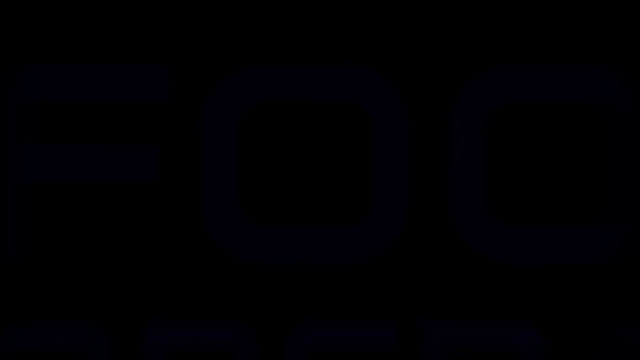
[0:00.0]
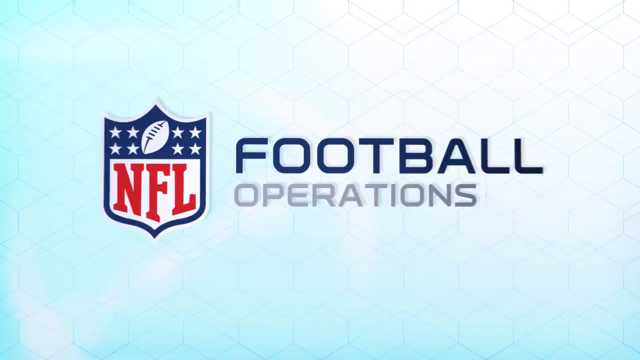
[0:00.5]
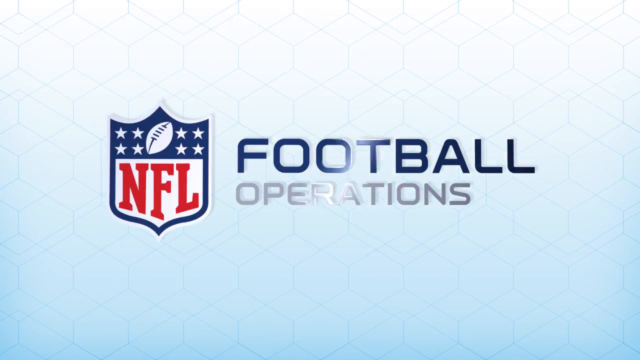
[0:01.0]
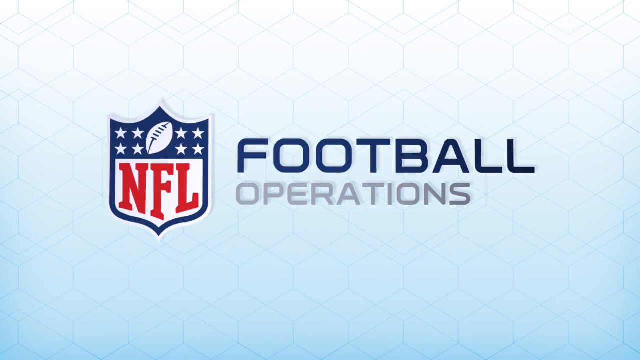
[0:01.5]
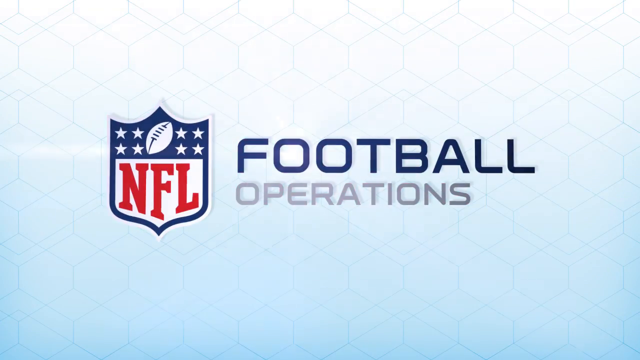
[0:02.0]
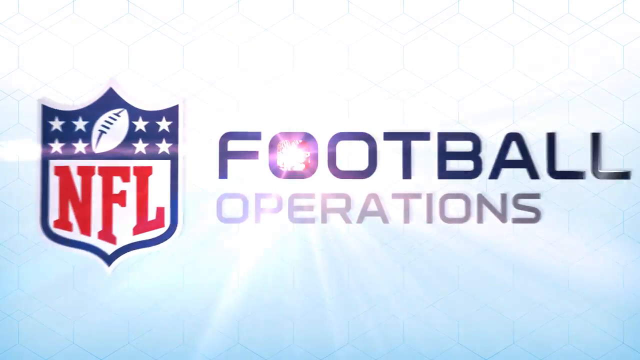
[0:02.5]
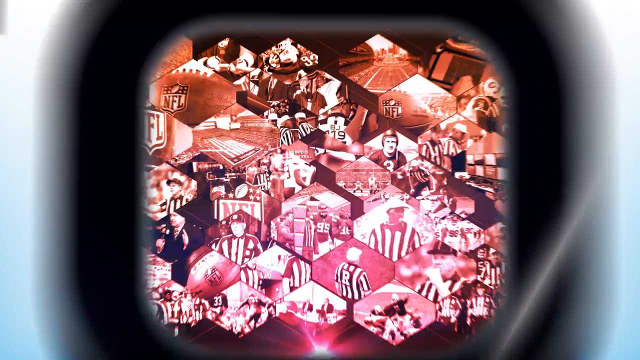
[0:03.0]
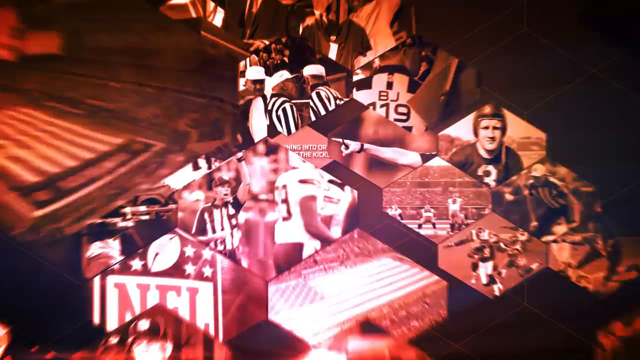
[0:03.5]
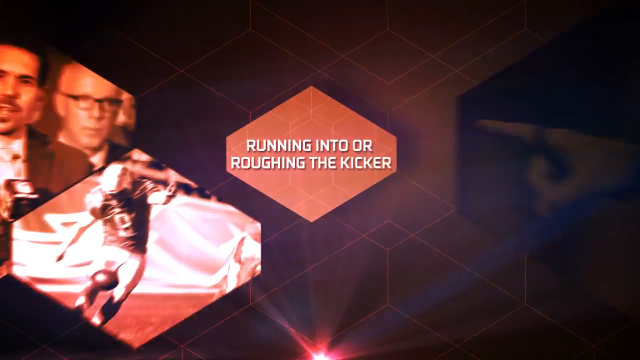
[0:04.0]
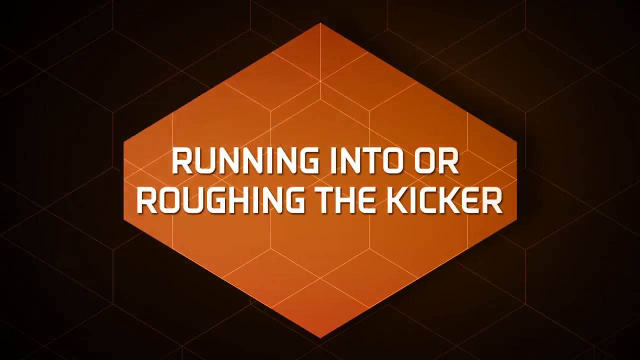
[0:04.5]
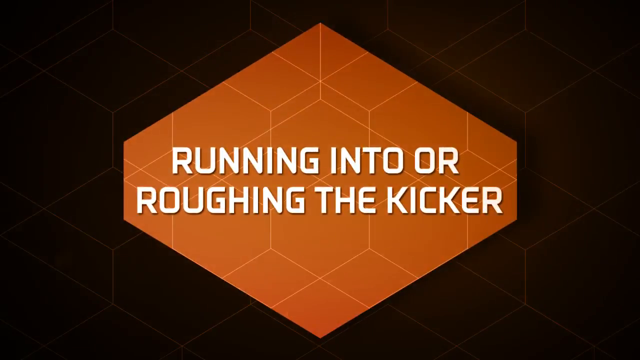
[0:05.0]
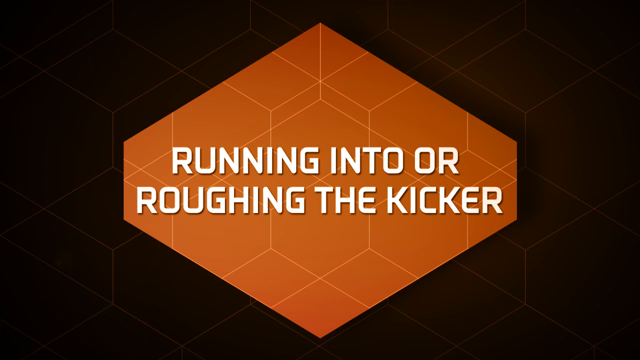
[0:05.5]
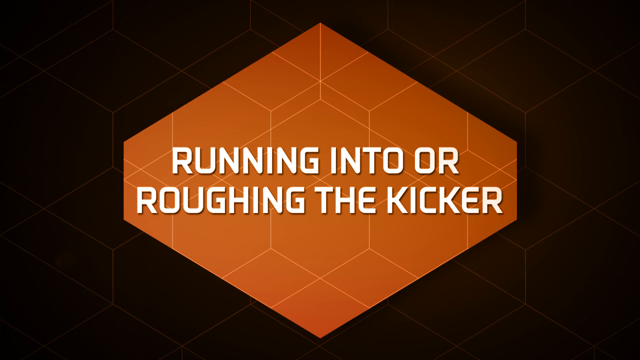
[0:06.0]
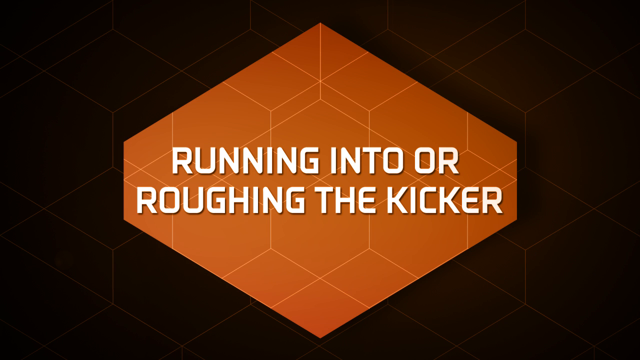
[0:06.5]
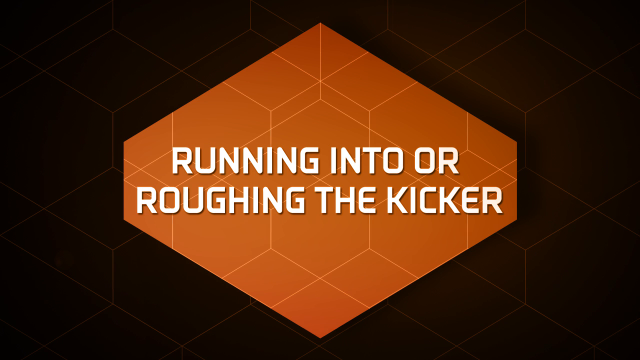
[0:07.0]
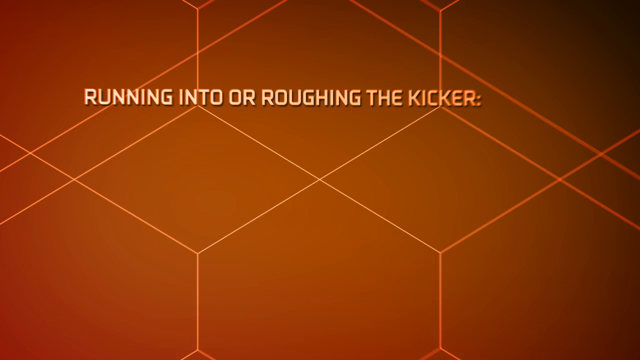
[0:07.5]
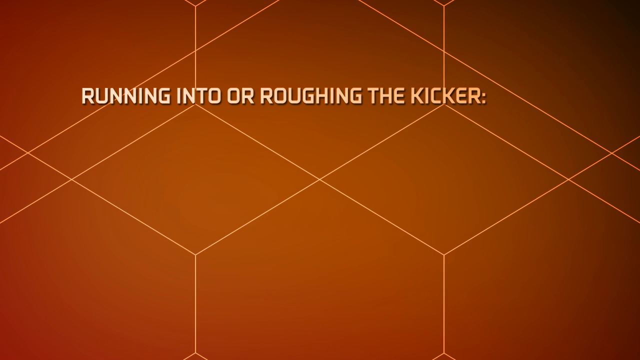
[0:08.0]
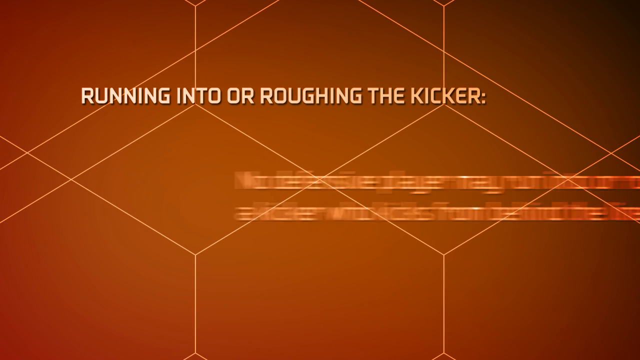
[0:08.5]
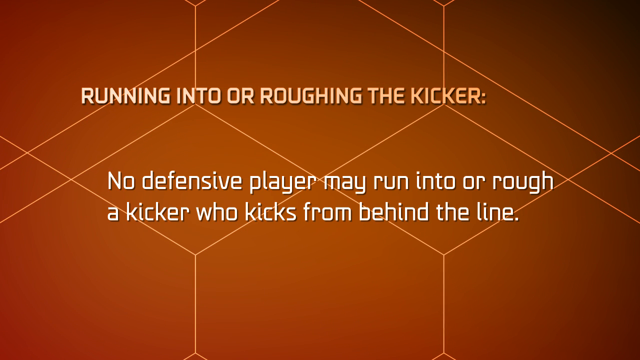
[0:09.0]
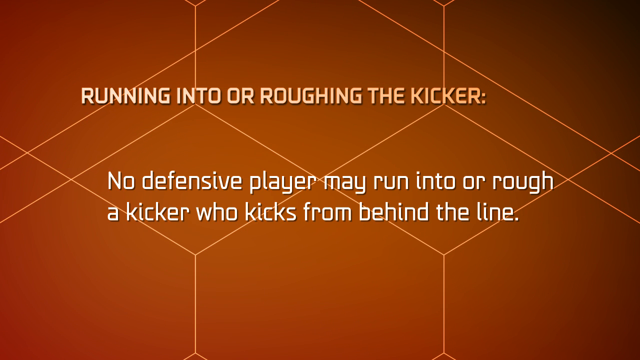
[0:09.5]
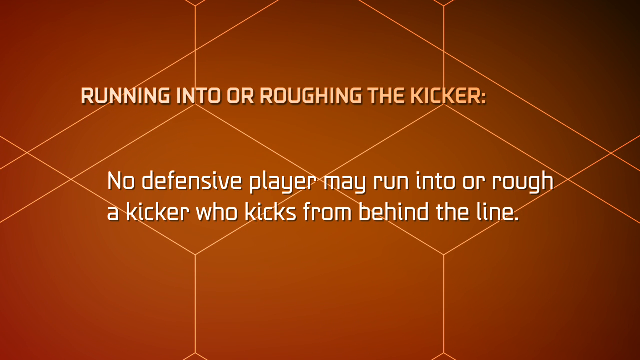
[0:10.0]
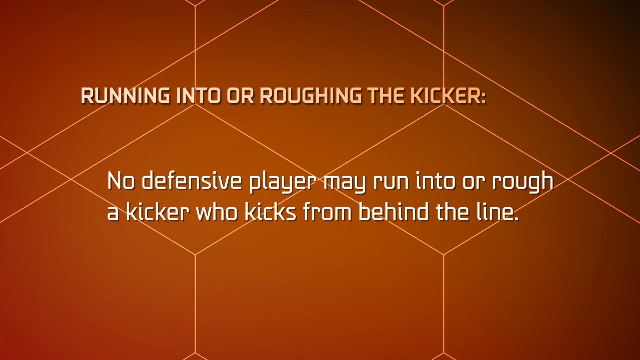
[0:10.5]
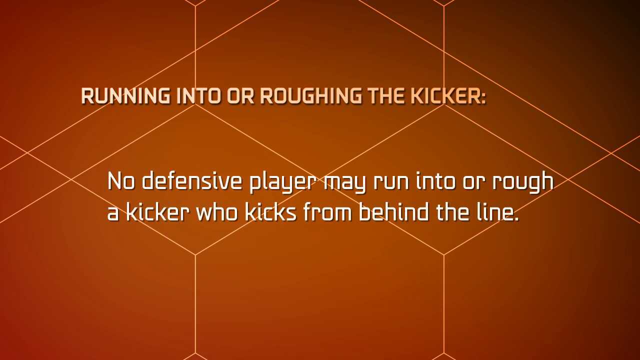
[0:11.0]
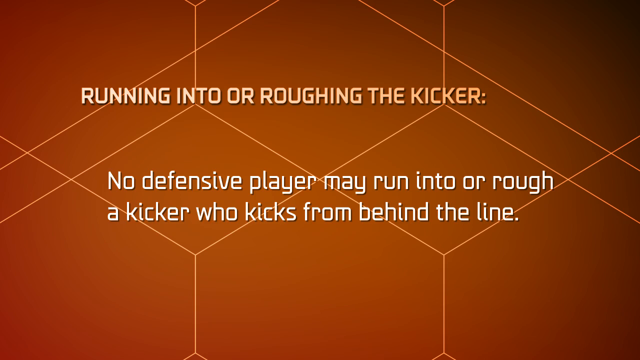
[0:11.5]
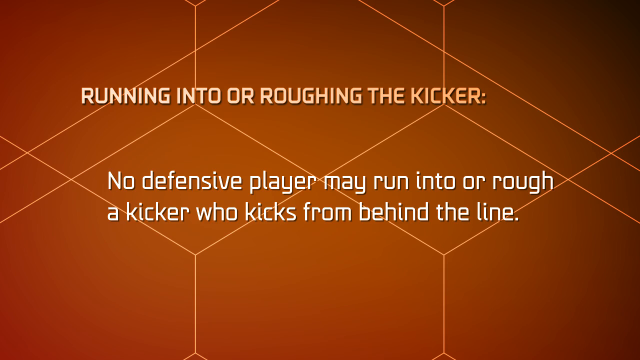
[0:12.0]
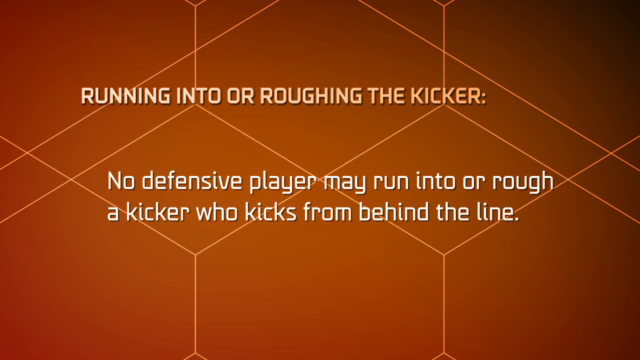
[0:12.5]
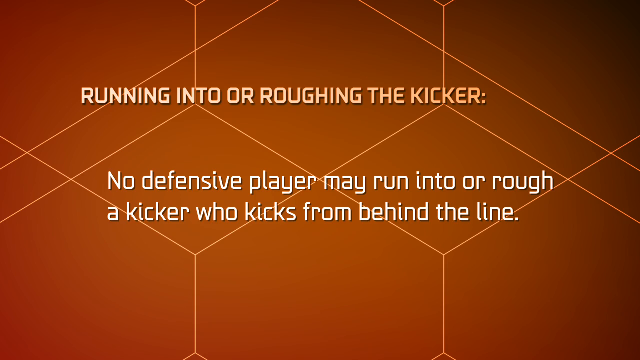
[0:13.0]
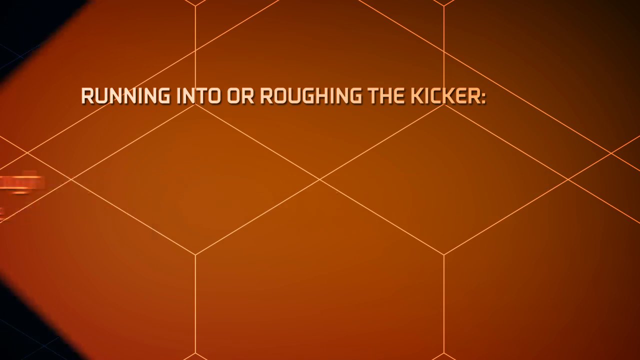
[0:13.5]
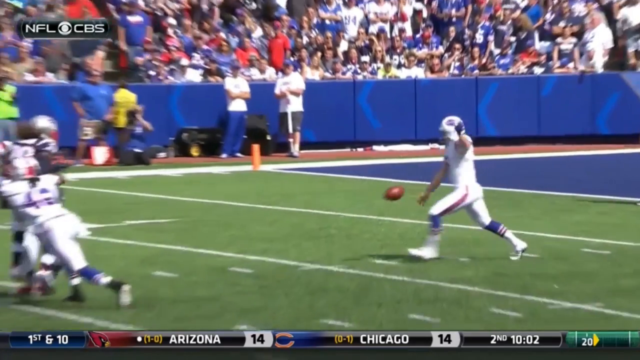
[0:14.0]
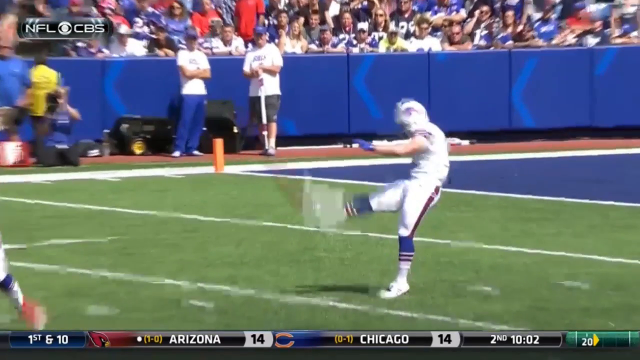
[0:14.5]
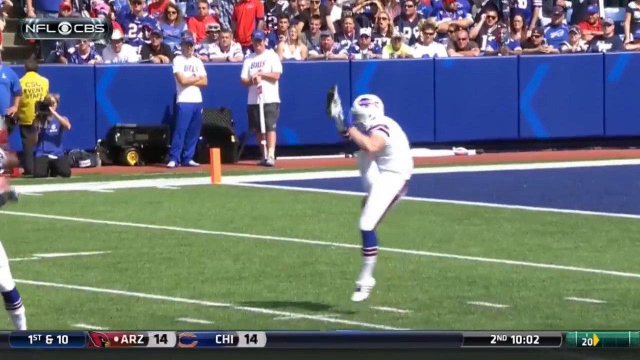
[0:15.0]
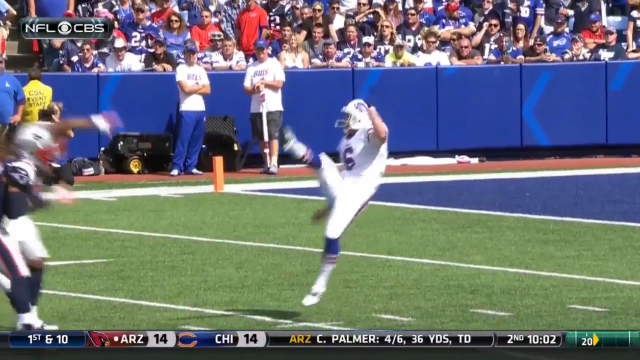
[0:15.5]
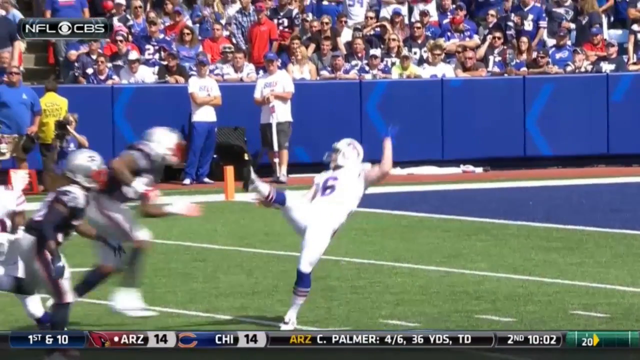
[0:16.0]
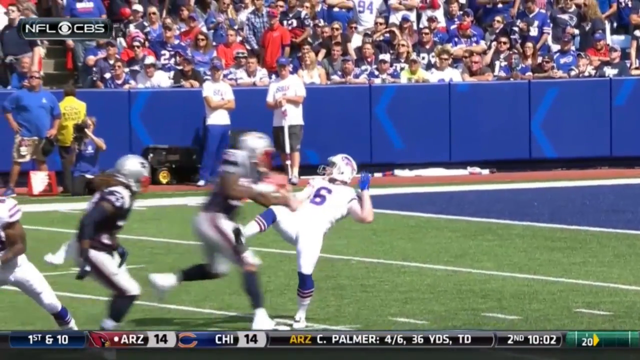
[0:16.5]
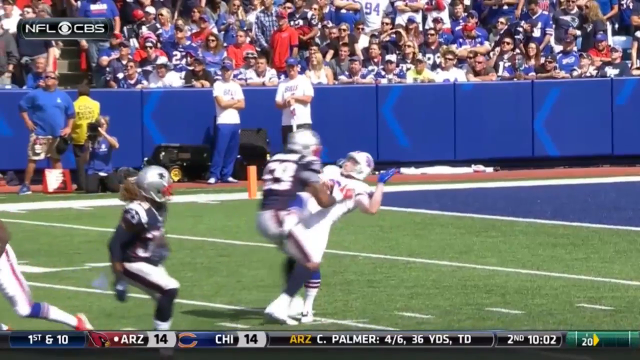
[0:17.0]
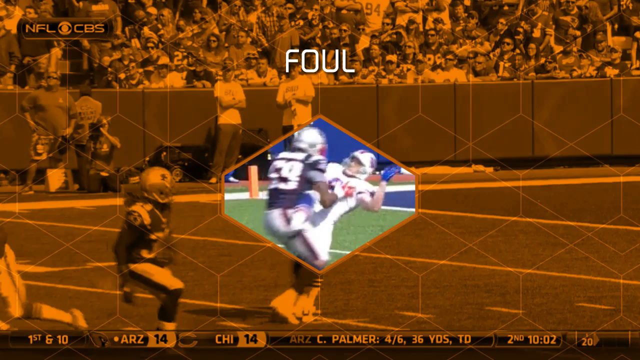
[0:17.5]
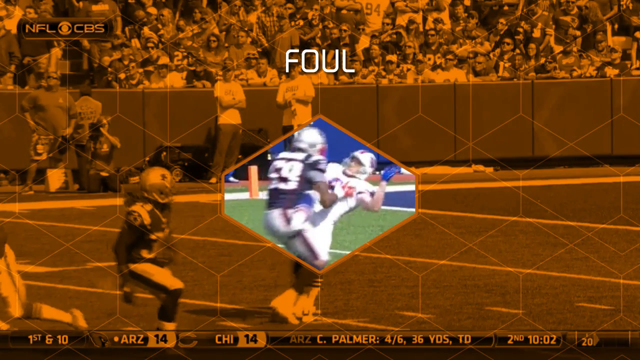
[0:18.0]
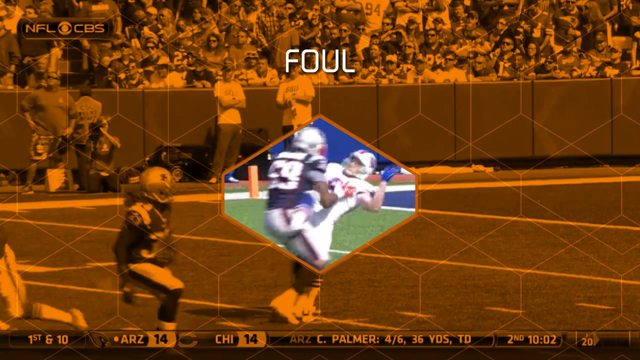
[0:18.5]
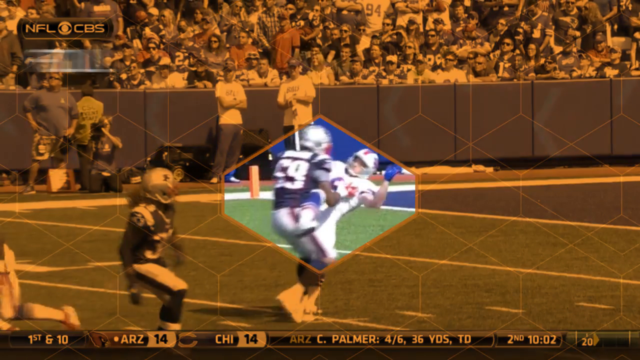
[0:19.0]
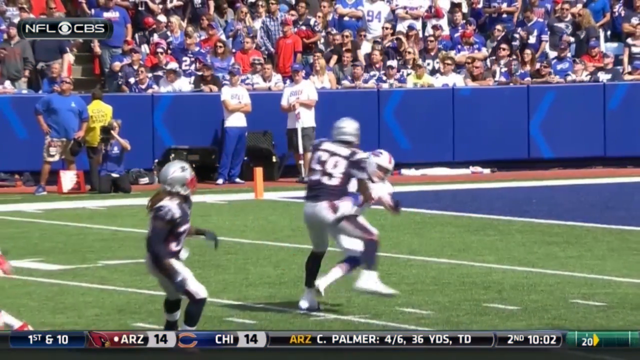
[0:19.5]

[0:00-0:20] The video opens with an NFL logo with "football operations" next to it on a white background. It then kind of pans to a bunch of diamonds of football footage and zeroes in on an orange diamond with "running into or roughing the kicker" in white text over it. The entire background of the screen turns orange with some white lines on it, and white text across the top reads "running into or roughing the kicker." Under that, white text reads "no defensive player may run into or rough a kicker who kicks from behind the line." That screen fades out, and a Bills player in a white uniform punts the ball from around his own 10-yard line. He drops the football and kicks it, almost ending up in a split position standing up because his leg gets so high. The football goes up into the air and out of view. A player on the opposing team comes running and hits him, and at the moment of contact the screen turns orange, kind of highlighting that moment, with "foul" on top of it.